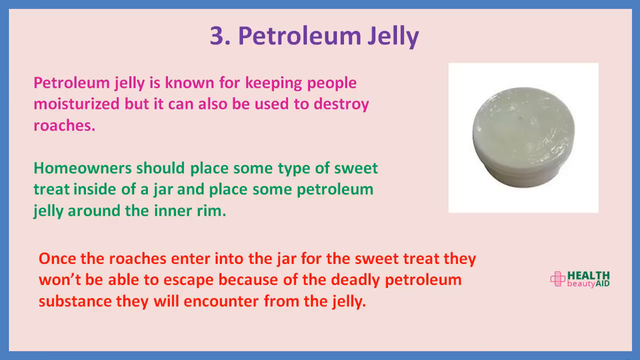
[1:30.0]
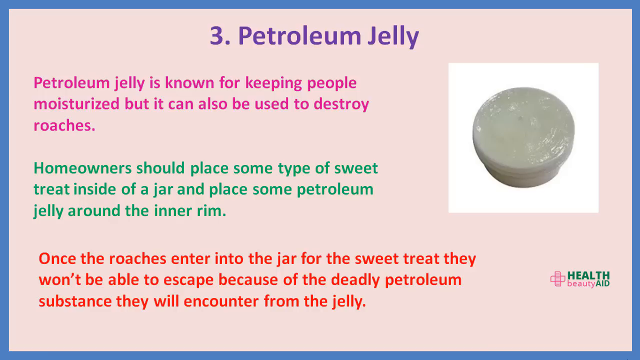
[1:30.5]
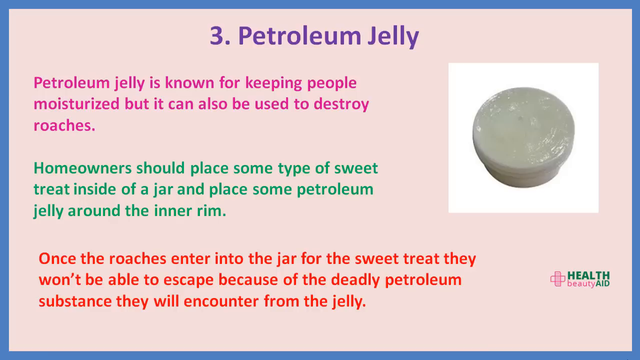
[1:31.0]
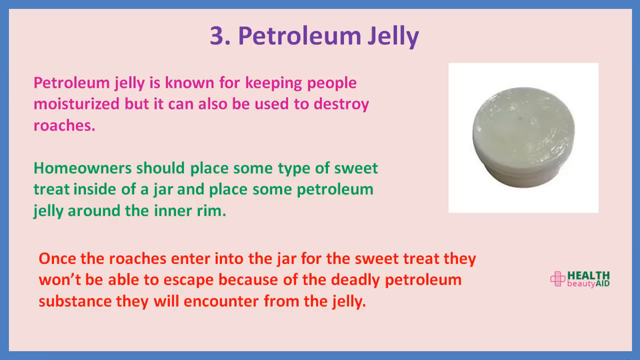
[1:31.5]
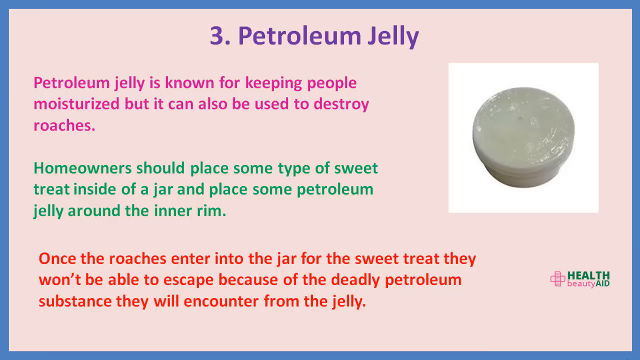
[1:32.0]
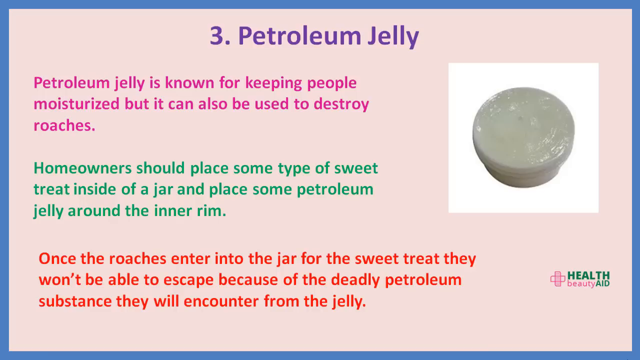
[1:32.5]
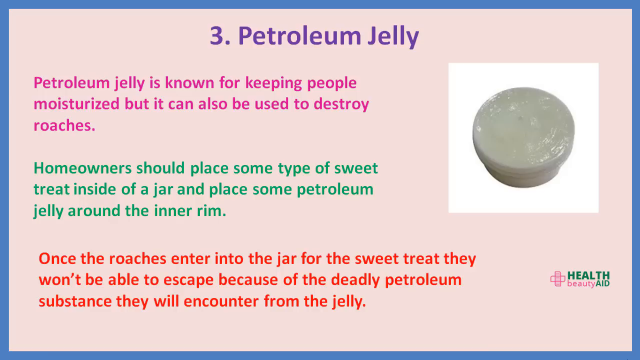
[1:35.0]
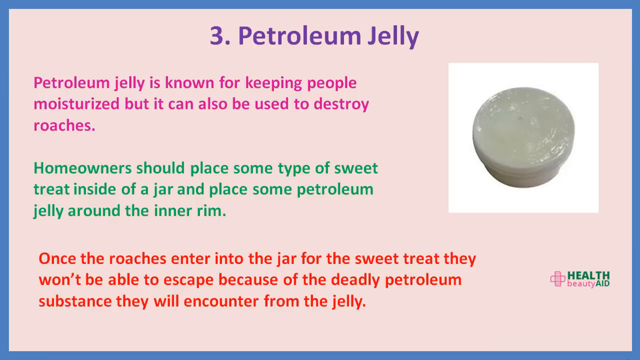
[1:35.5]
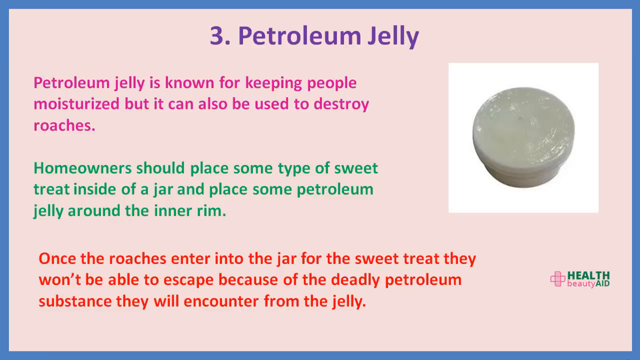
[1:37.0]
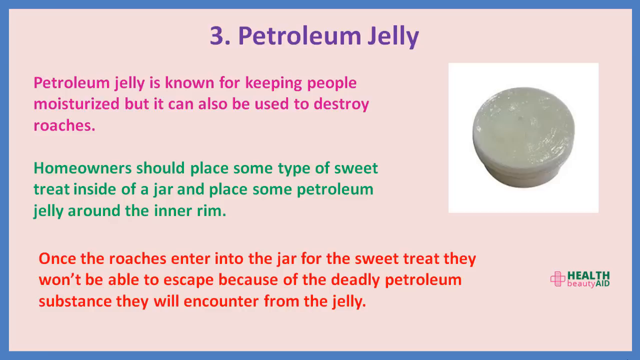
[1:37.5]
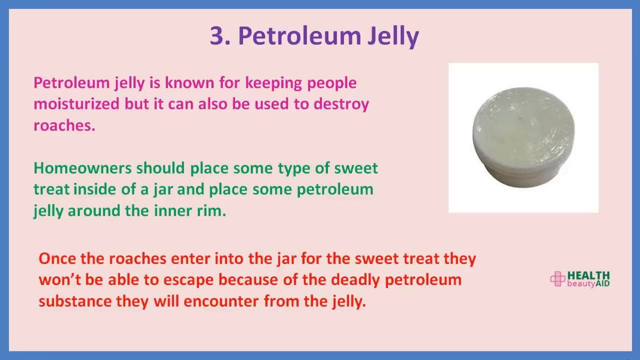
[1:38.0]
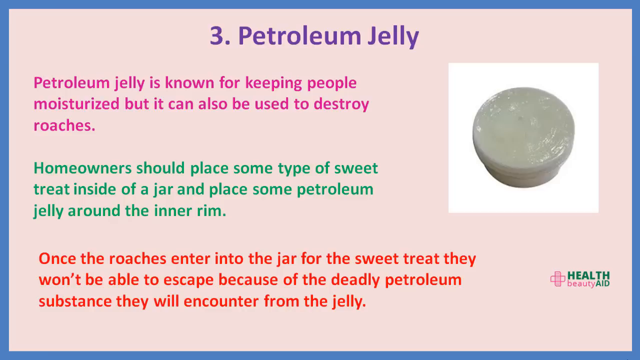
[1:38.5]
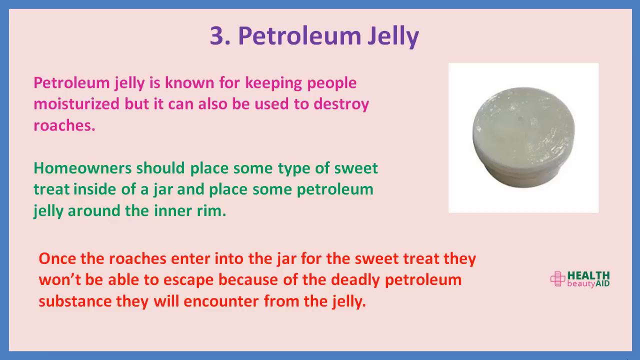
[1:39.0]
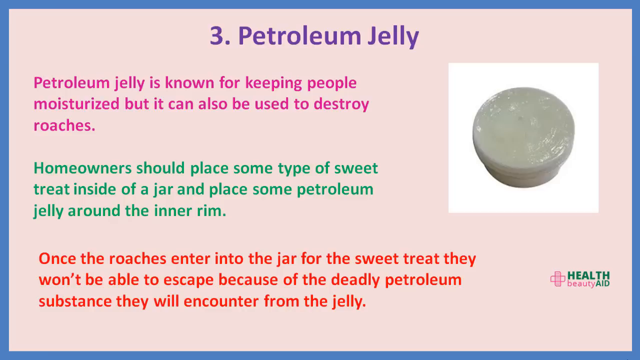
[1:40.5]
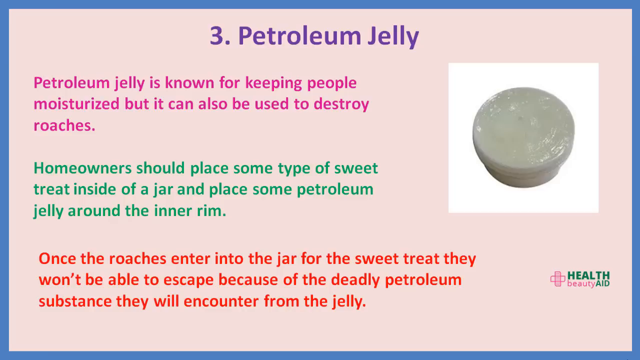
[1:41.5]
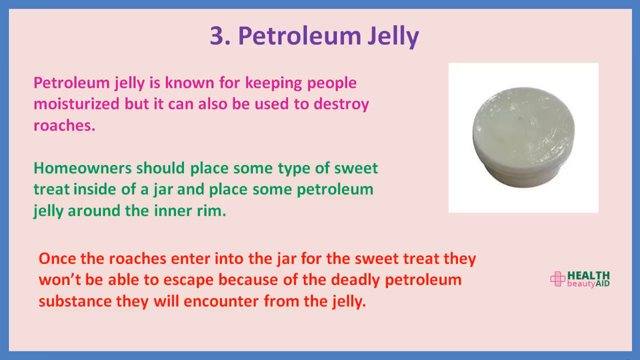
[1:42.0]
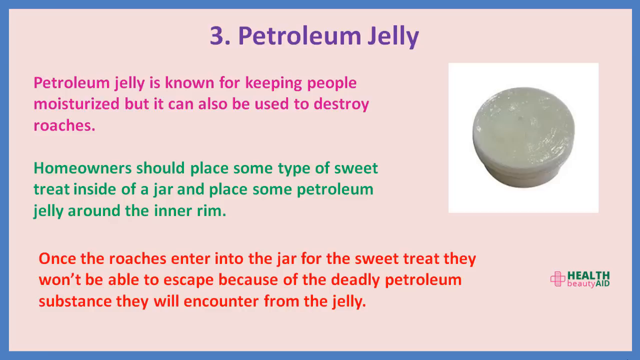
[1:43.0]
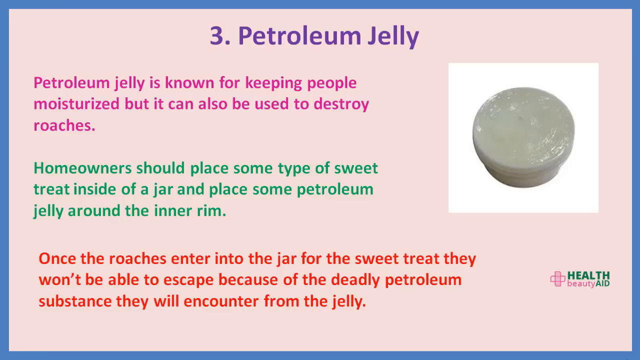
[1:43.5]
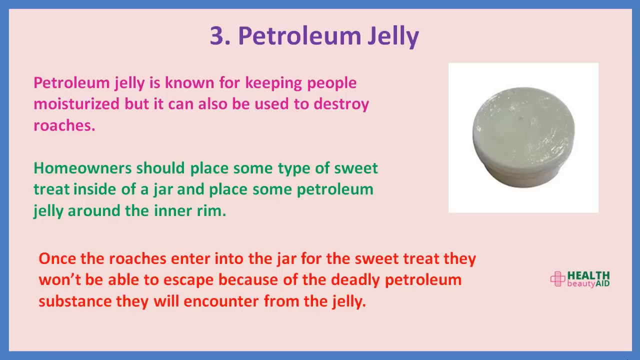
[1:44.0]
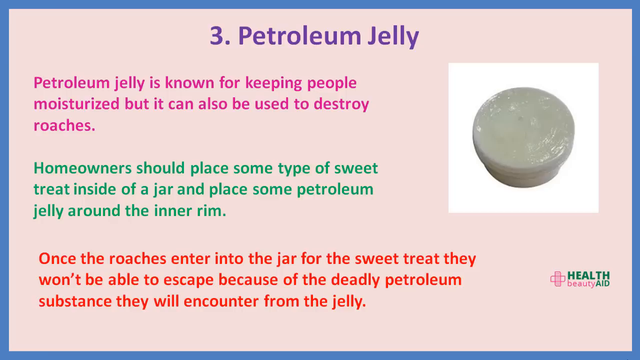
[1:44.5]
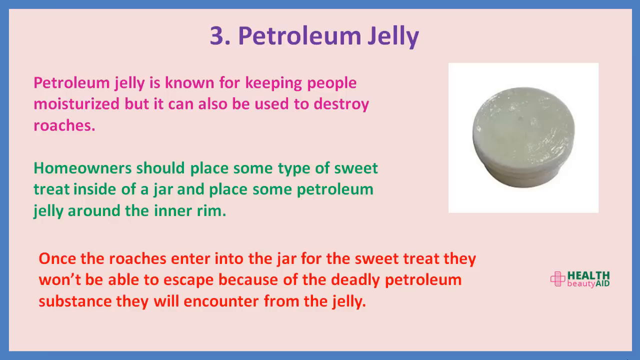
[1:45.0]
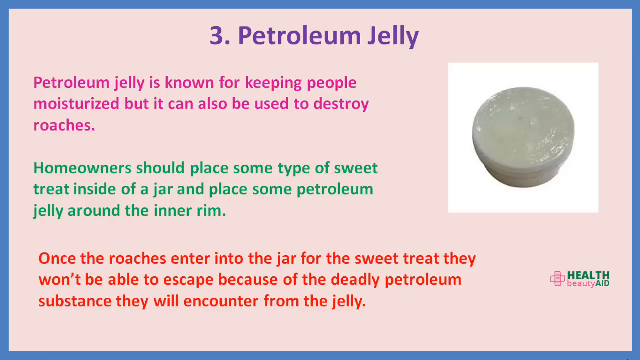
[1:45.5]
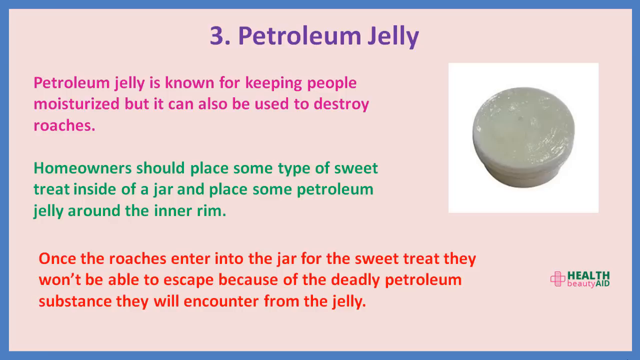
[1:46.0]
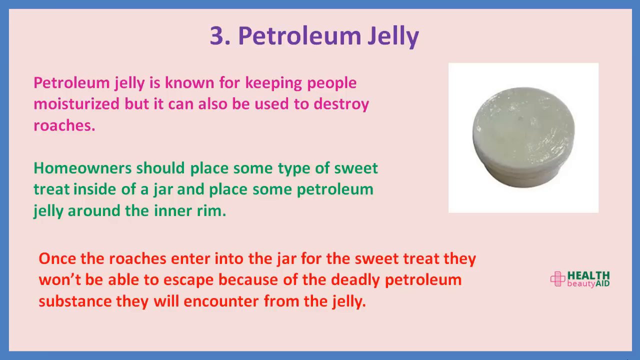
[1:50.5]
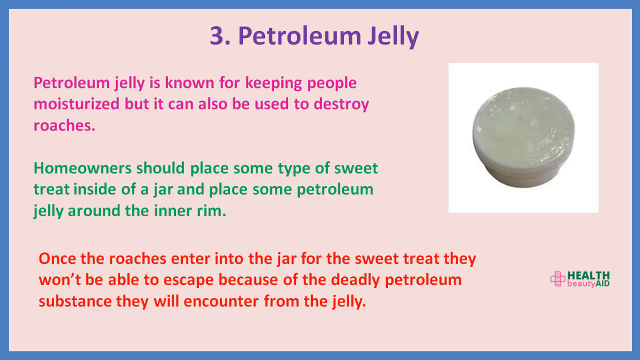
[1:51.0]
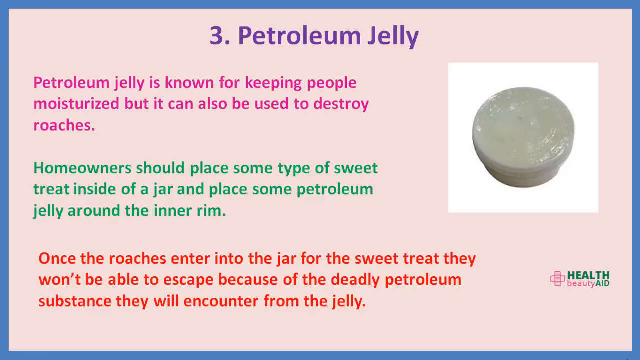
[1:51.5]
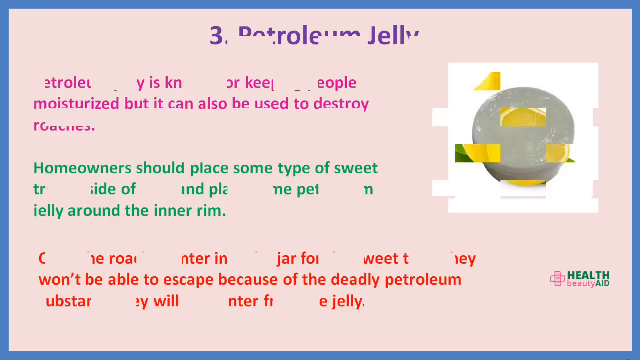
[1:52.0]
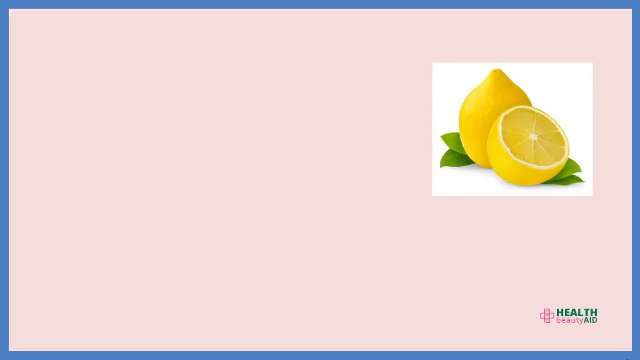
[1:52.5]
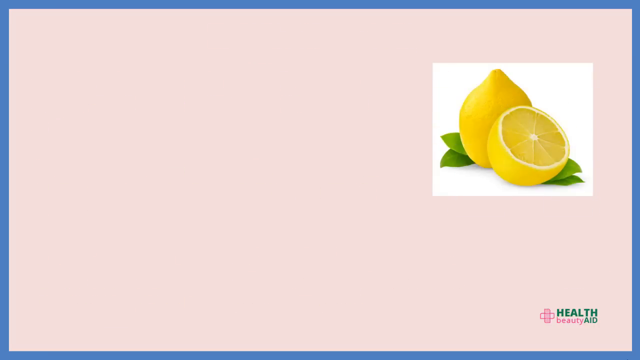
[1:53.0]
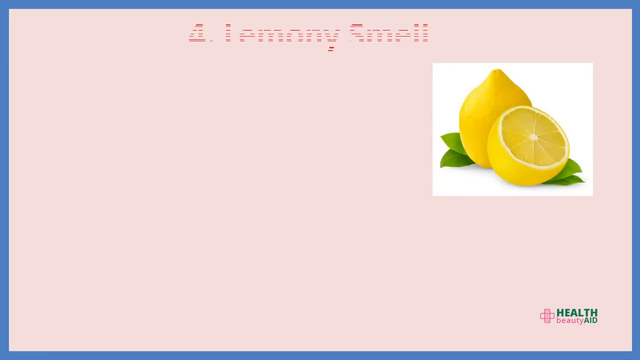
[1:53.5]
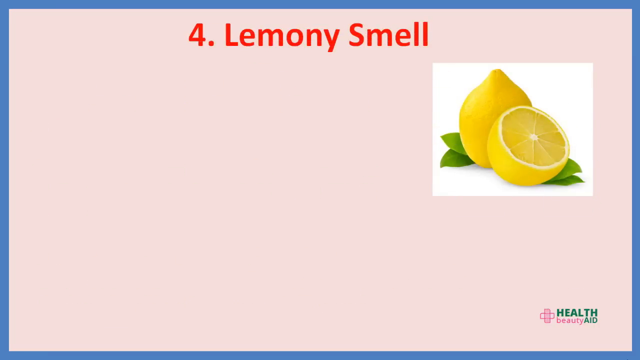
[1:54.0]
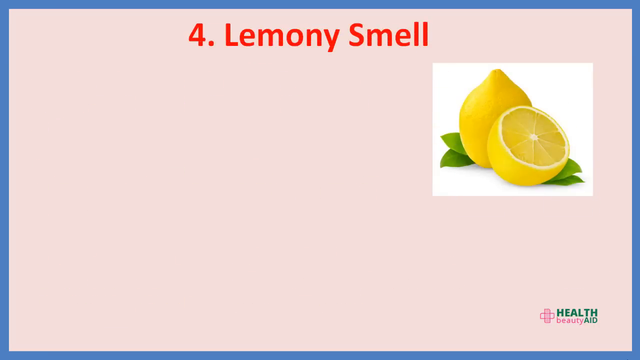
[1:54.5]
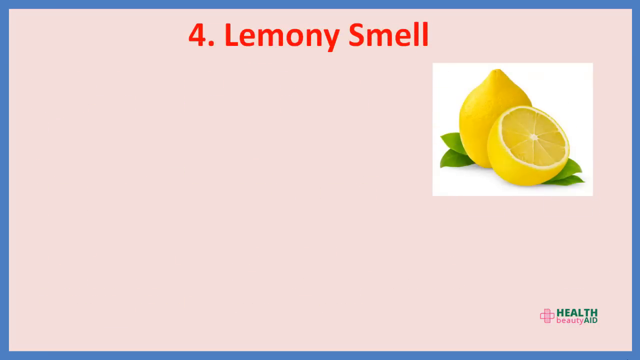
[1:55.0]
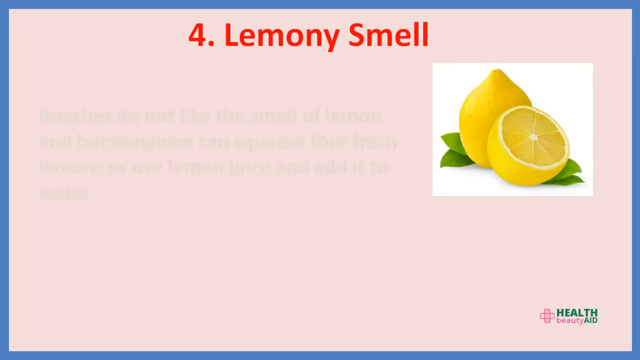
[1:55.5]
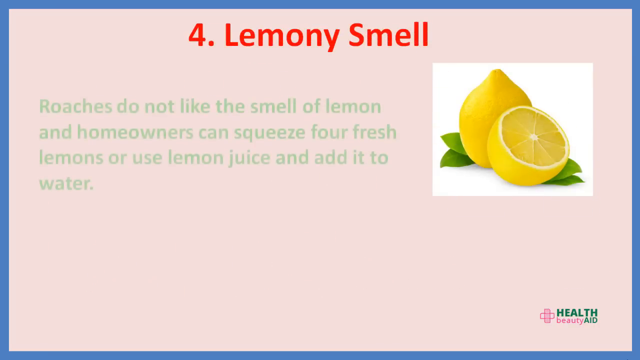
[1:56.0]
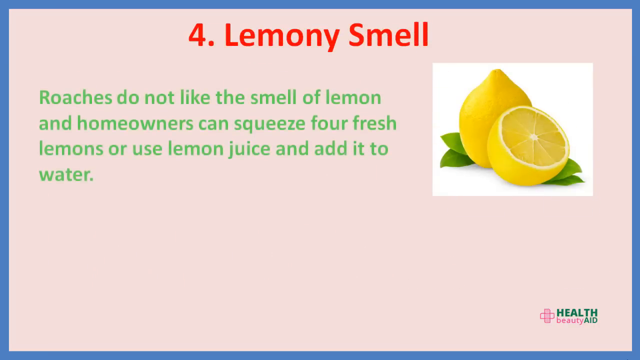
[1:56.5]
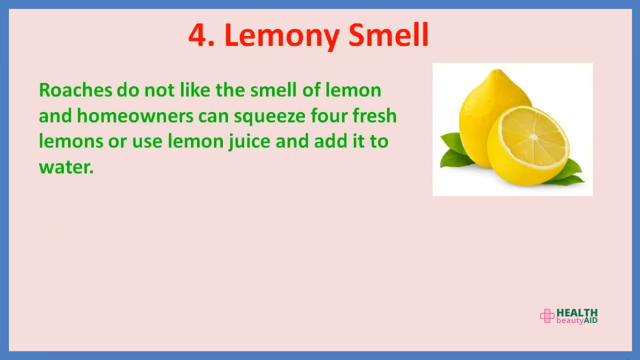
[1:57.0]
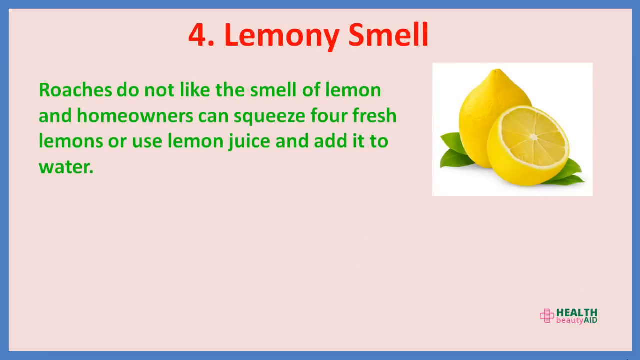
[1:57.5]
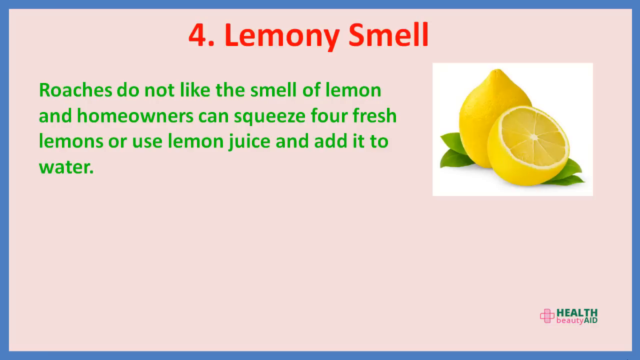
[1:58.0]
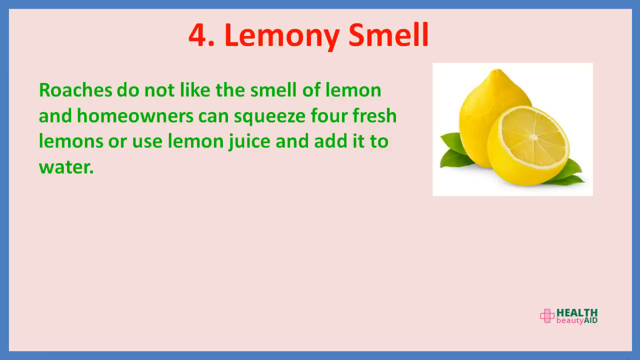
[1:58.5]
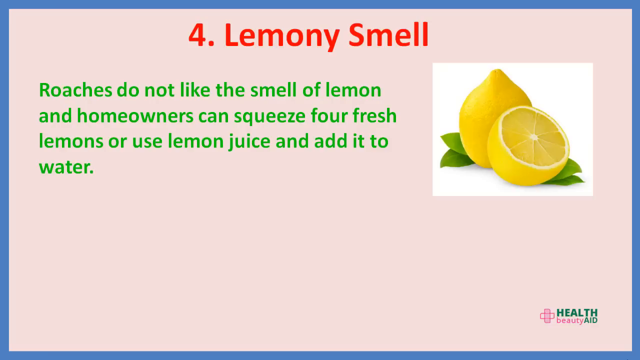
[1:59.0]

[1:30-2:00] The slide is light pink on the inside, with purple lettering at the top reading "three petroleum jelly." Below, in a lighter shade of pink, it reads "Petroleum jelly is known for keeping people moisturized but can also be used to destroy roaches." Green lettering below says "homeowners should place some type of sweet treat inside of a jar and place some petroleum jelly around the inner rim." Orange lettering below says "once the roaches enter into the jar for the sweet treat they won't be able to escape because the deadly petroleum substance they will encounter from the jelly." On the right side is a white square with a gray rounded piece in the center. At the bottom right, green lettering says "health," pink lettering below says "beauty," and green lettering to the right says "aid," with a pink cross like a band-aid to the left of these letters. The image then changes to another blue frame with a light pink background. Orange lettering at the top says "four lemony smell," and green lettering below says "roaches do not like the smell of lemon and homeowners can squeeze four fresh lemons or use lemon juice and add it to the water." On the right side is a white box containing two yellow lemons: one whole, tipped at the top, and the second cut, with a white round rim and a white center. Two green leaves are at the bottom left and right. At the very far bottom right, green letters say "health," pink below says "beauty," green to the right says "aid," and at the far left is a pink cross like a band-aid.